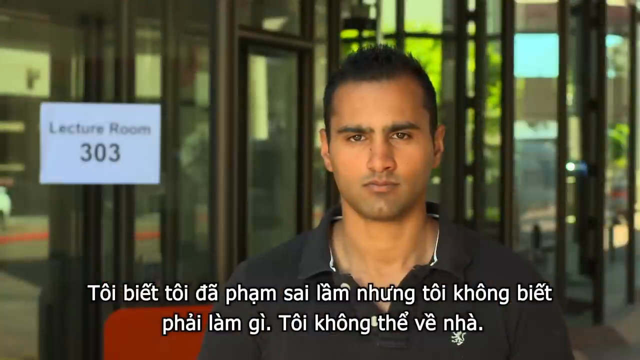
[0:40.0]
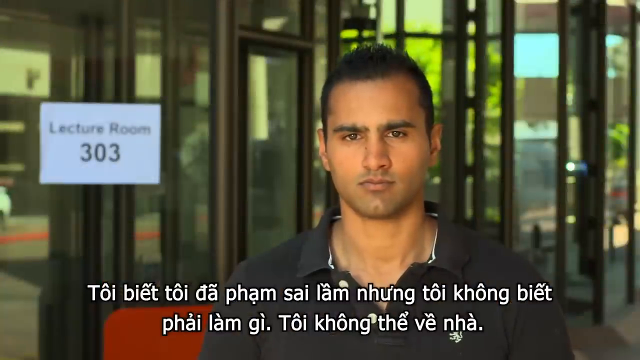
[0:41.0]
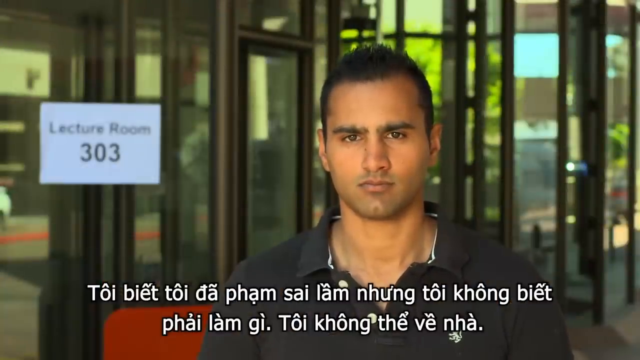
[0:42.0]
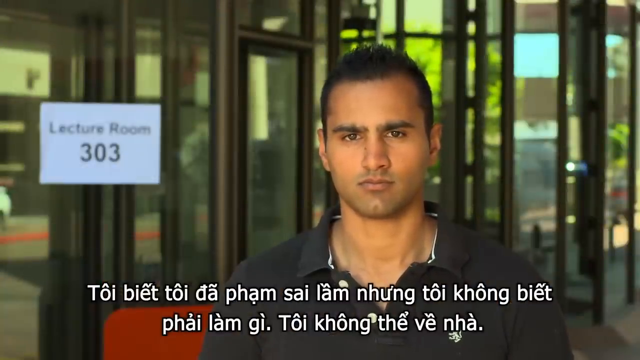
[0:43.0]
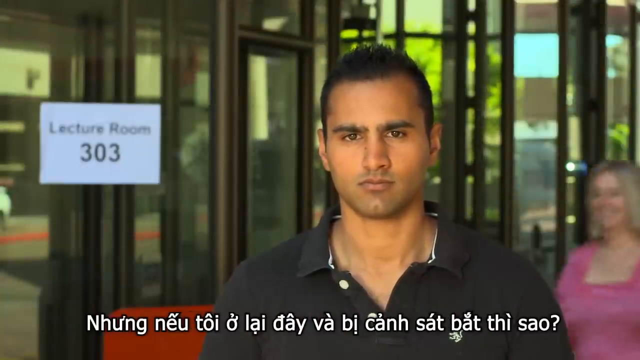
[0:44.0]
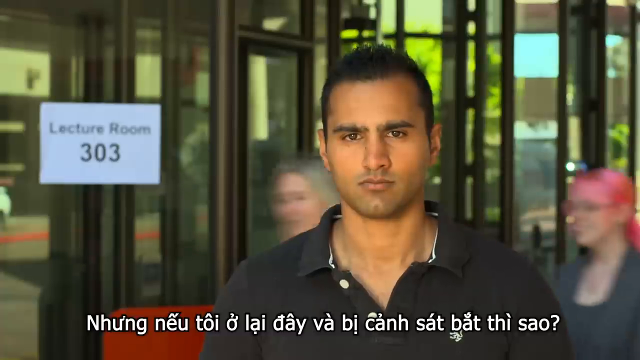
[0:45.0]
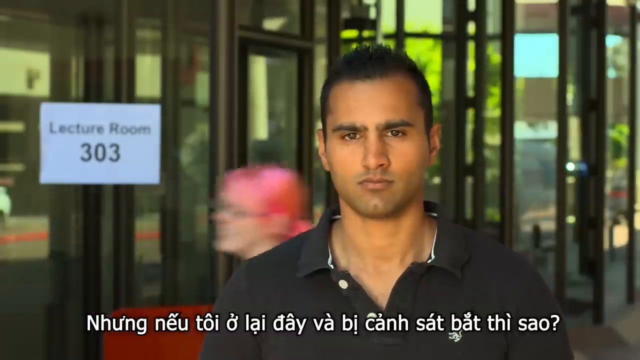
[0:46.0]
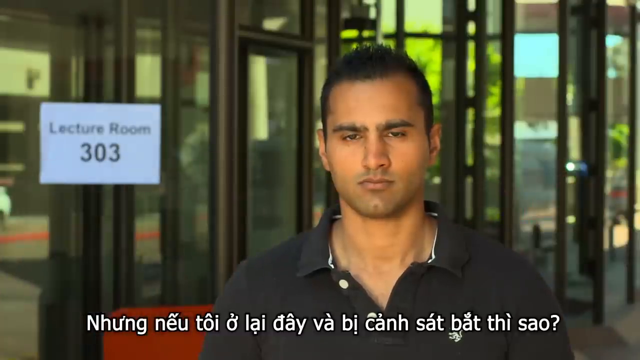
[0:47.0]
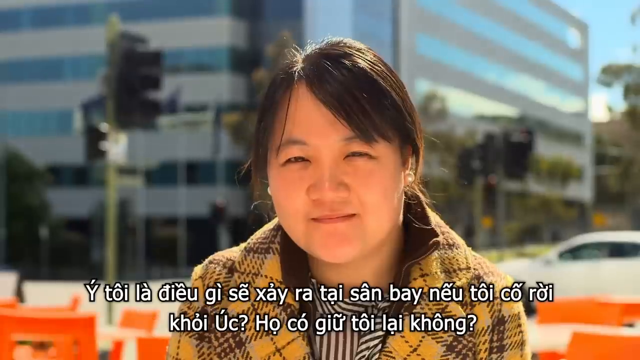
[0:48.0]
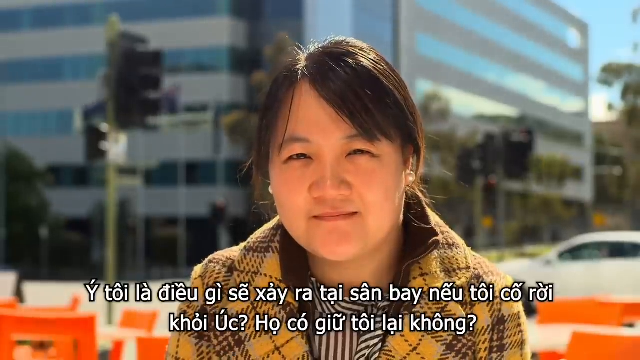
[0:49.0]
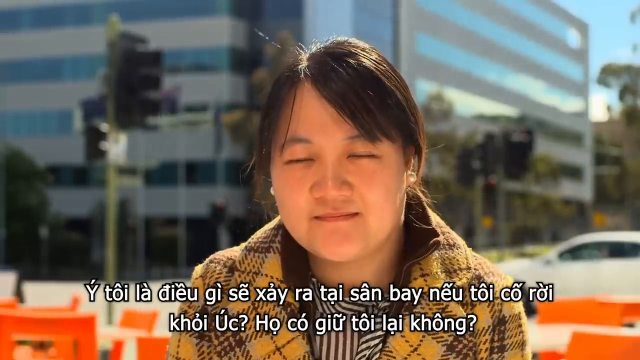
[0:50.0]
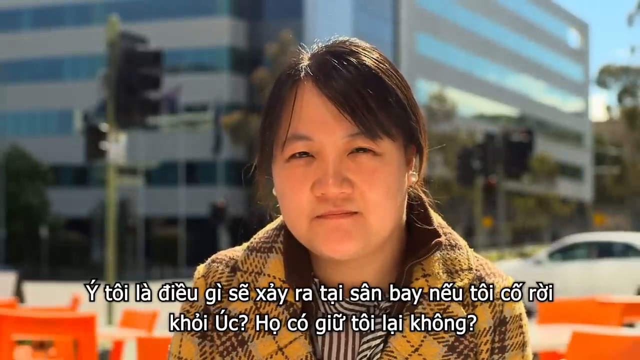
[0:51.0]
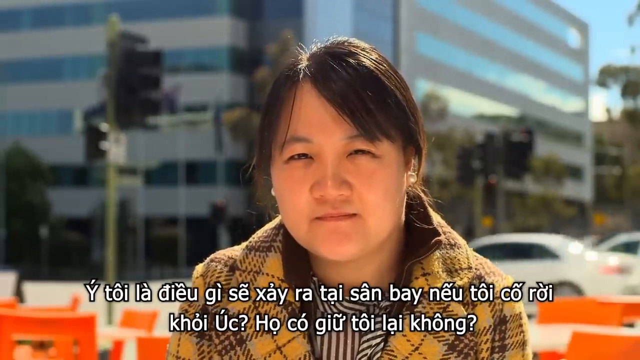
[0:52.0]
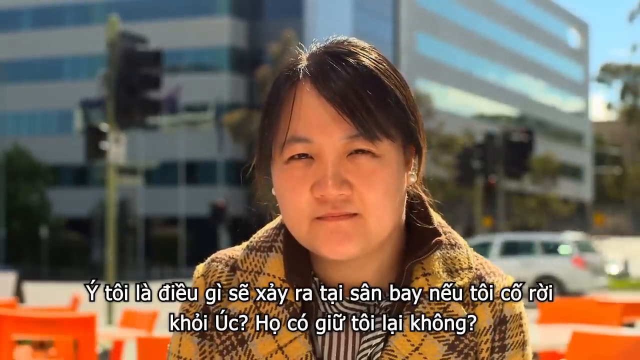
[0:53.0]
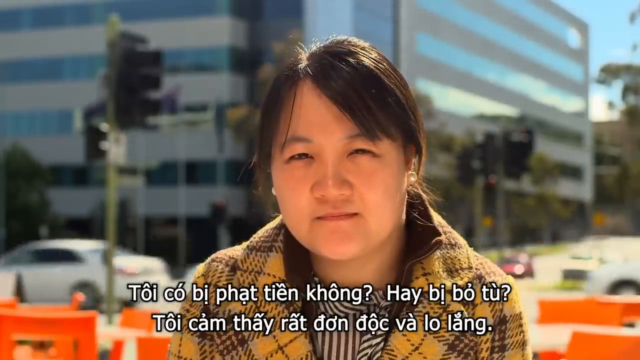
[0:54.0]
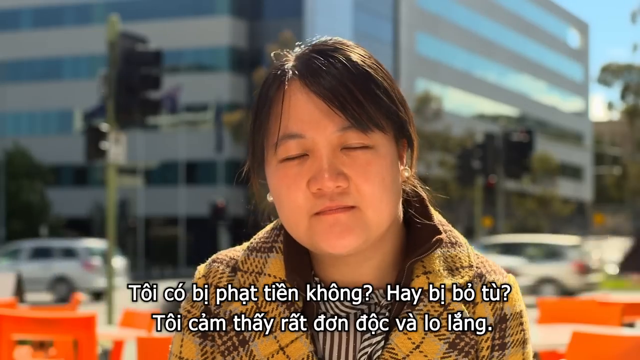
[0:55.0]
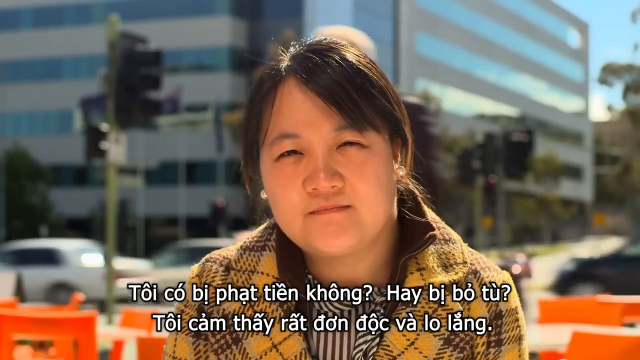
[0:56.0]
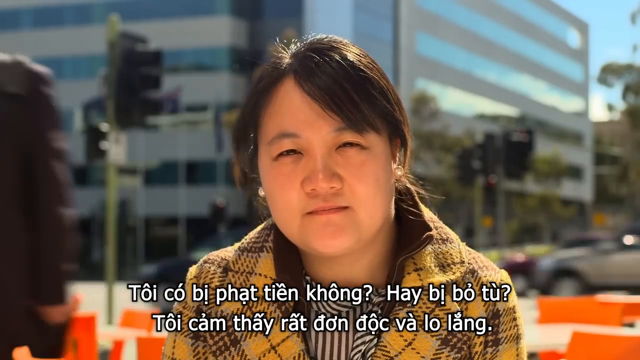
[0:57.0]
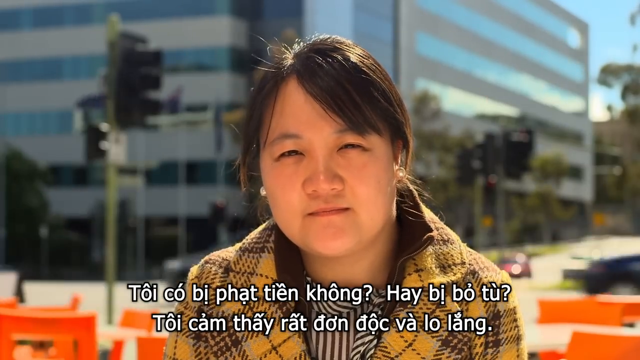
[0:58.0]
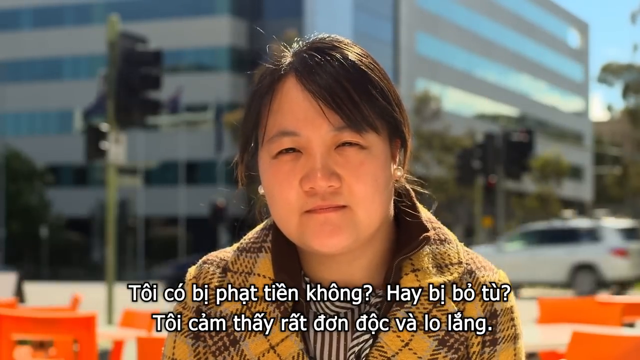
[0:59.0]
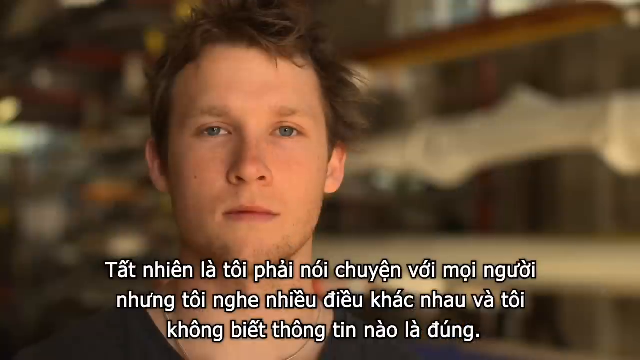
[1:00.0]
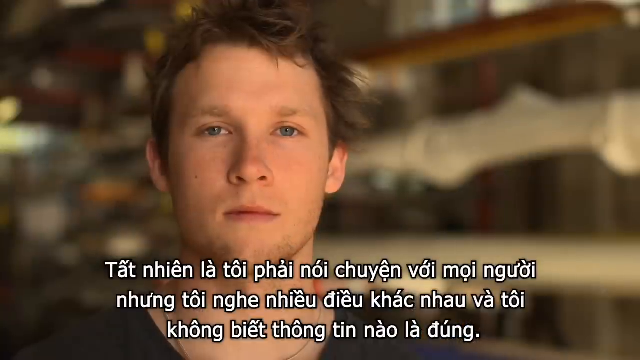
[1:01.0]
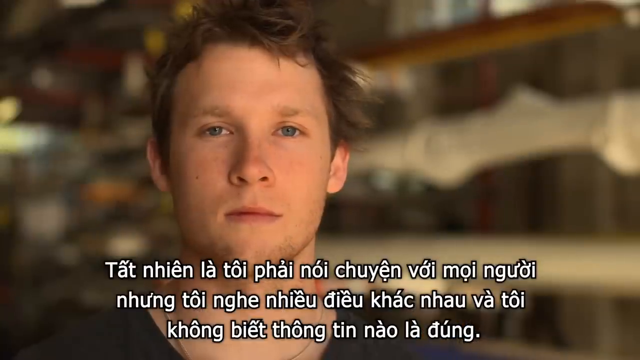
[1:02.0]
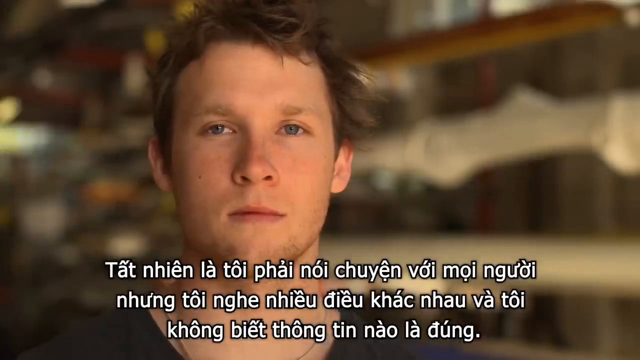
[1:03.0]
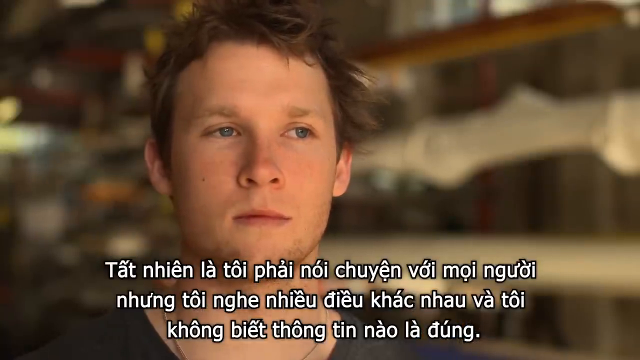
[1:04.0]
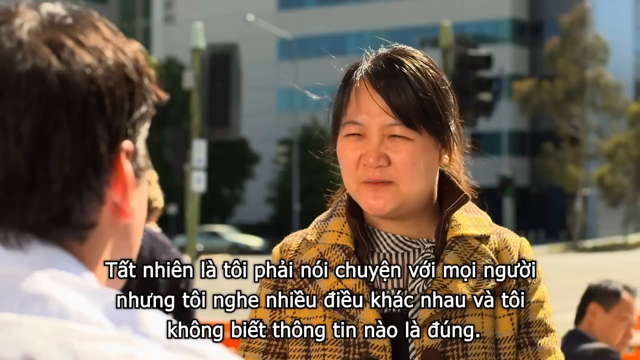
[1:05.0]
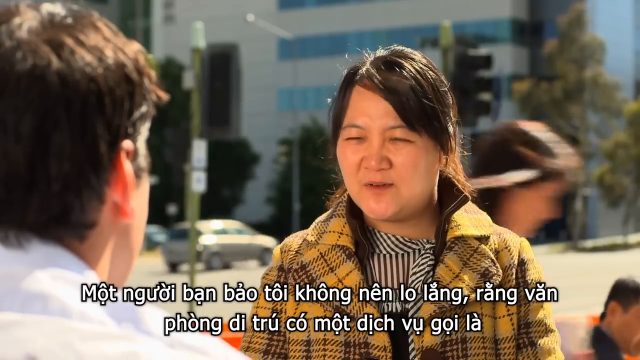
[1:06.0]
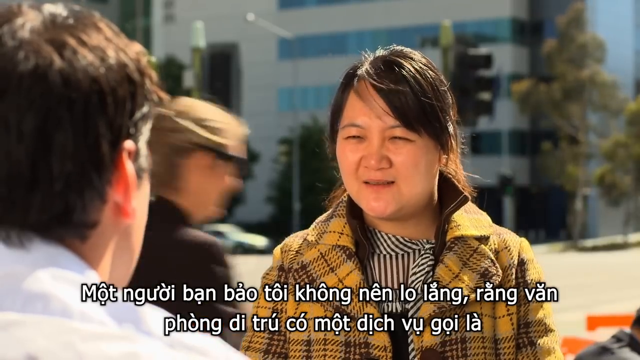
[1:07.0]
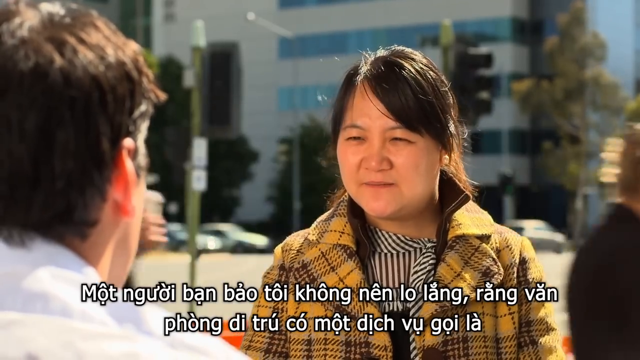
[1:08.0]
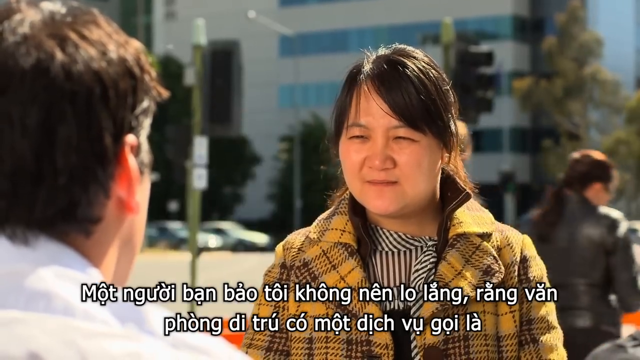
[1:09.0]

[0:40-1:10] The Indian man who was smiling earlier now has his arms folded and looks a little more serious. He stares right at the camera, positioned a little off-center to the right. A sign reading "lecture room 303" looks like a plain piece of paper on a pane of glass. Various windows and doors with a darker brown frame are behind him. He appears to have thicker eyebrows and a bit of a five o'clock shadow. The image clarity is not great and is a little pixelated. Off to his left, a woman walks by quickly, seemingly the woman with pink hair and a pink shirt from earlier. The video returns to the Asian woman in her coat, apparently waiting for someone to speak to her. She wears a zip-up yellow wool flannel-like coat, with either a black and white scarf or some kind of shirt underneath, and almost pearl-looking dangling earrings. A whole bunch of cars pass, and a man in what looks like a business suit comes around her side. The white man is shown staring, looking off to the left a little. The interview then starts: her back is shown toward the man being interviewed, and he appears to be talking while she listens.